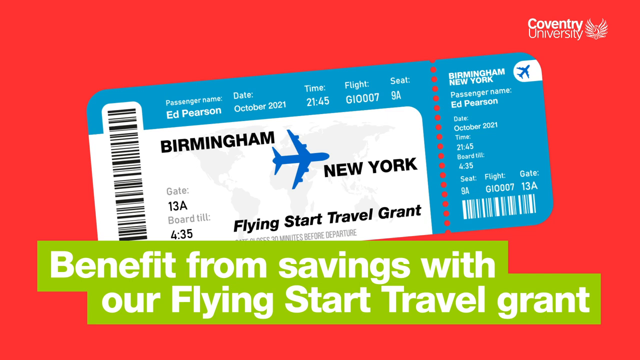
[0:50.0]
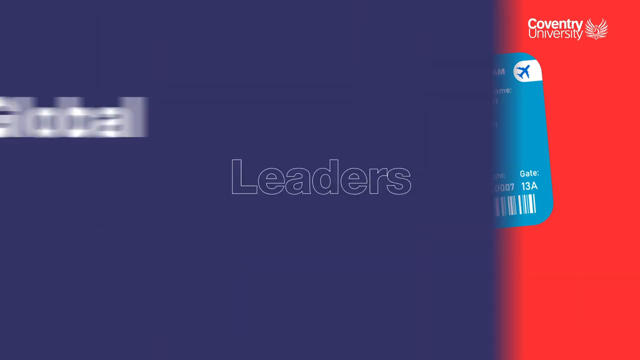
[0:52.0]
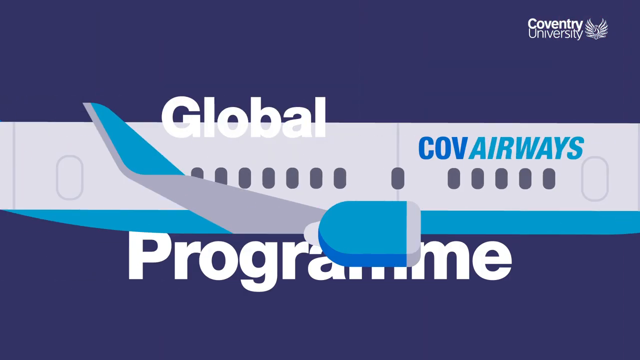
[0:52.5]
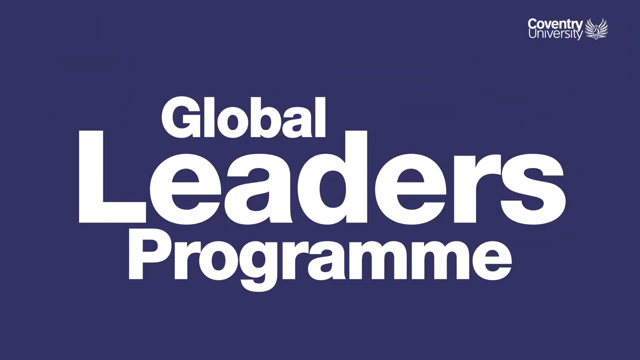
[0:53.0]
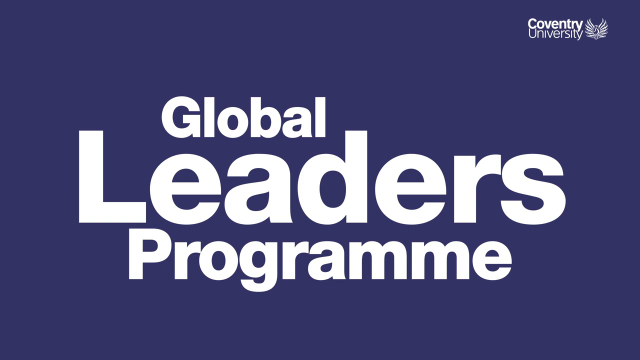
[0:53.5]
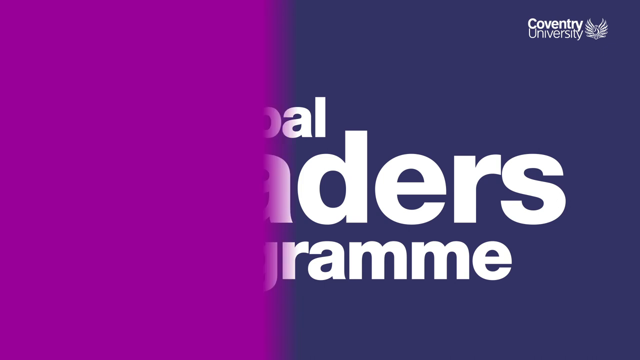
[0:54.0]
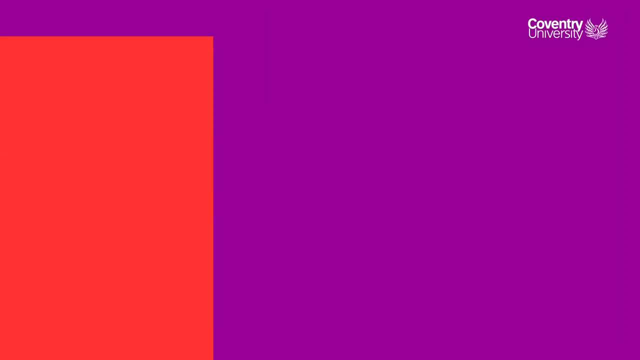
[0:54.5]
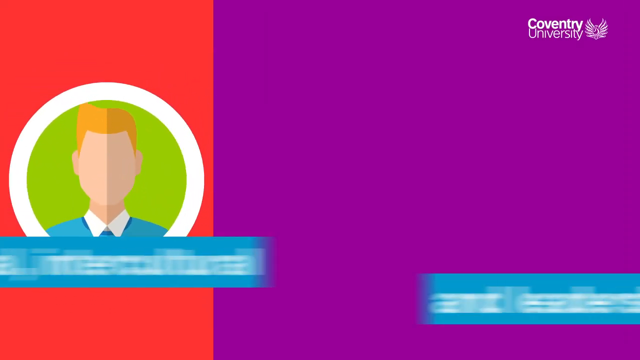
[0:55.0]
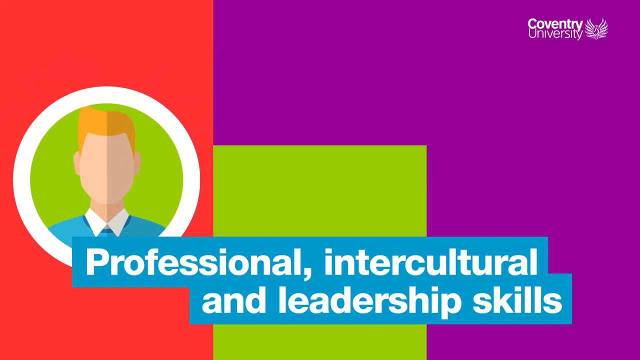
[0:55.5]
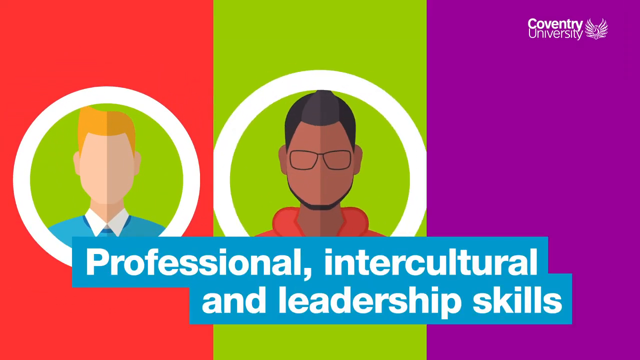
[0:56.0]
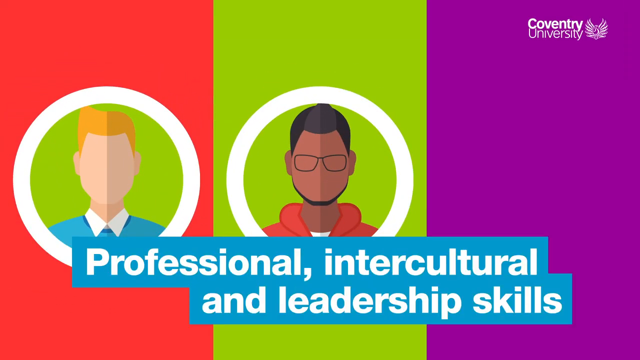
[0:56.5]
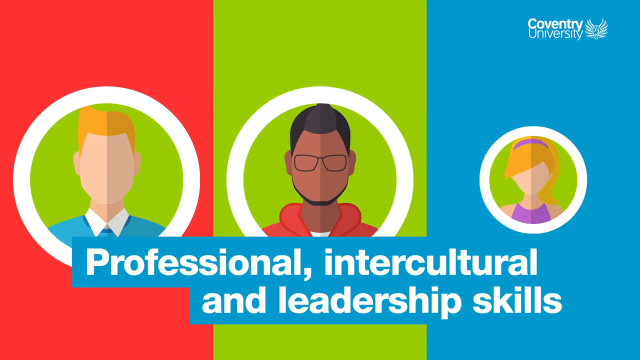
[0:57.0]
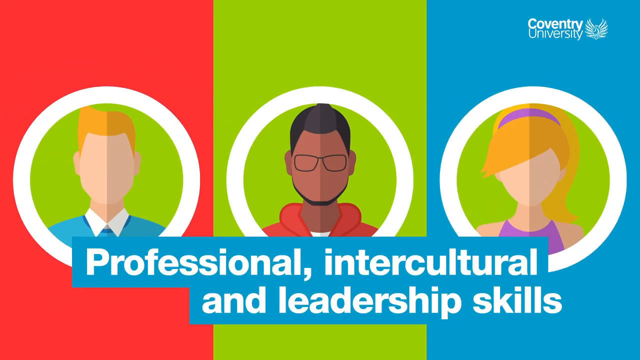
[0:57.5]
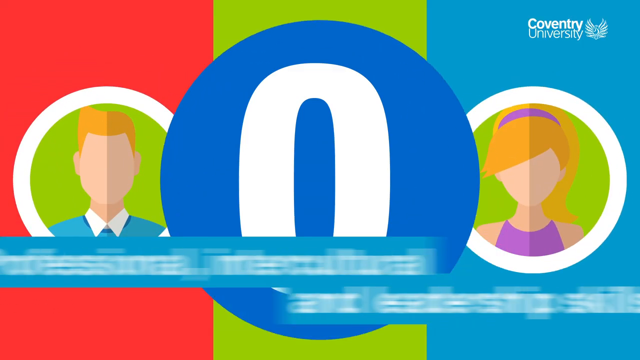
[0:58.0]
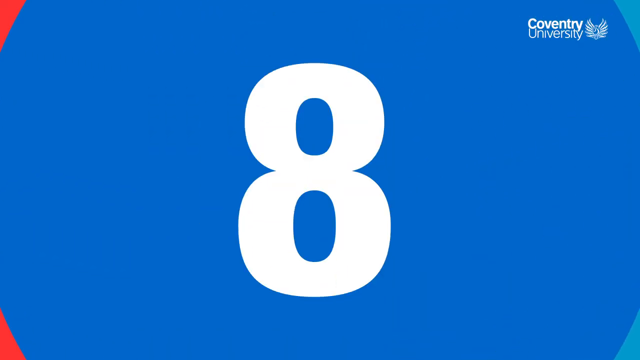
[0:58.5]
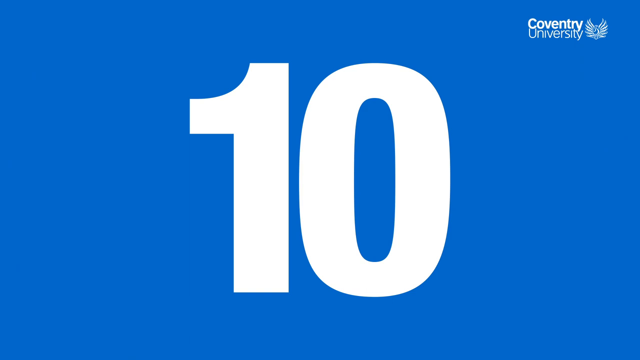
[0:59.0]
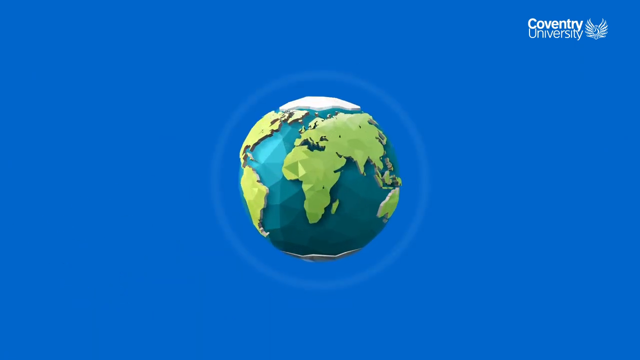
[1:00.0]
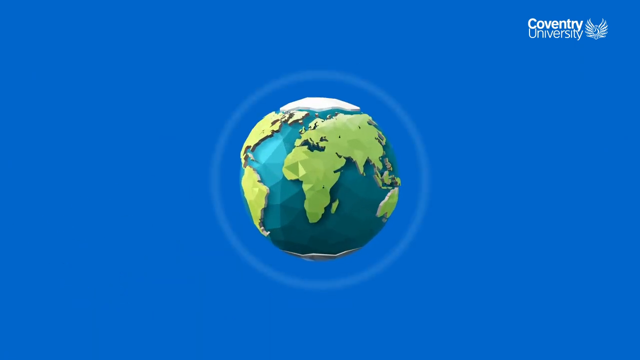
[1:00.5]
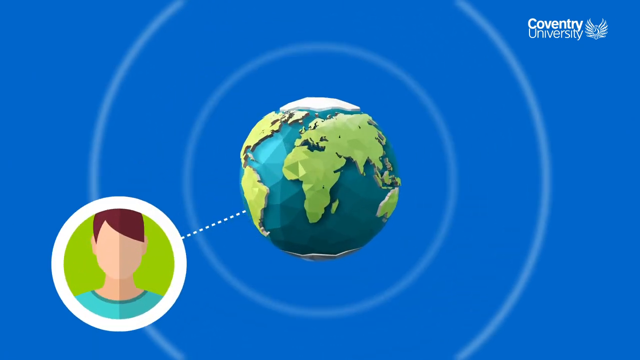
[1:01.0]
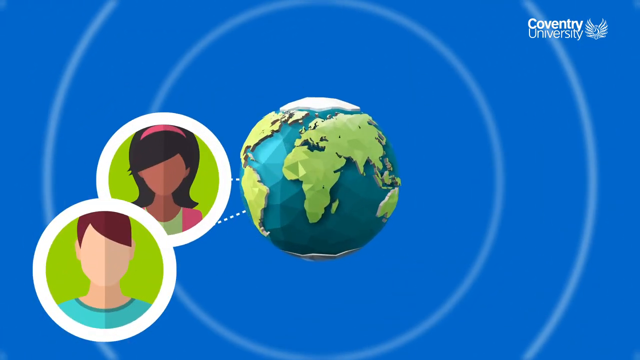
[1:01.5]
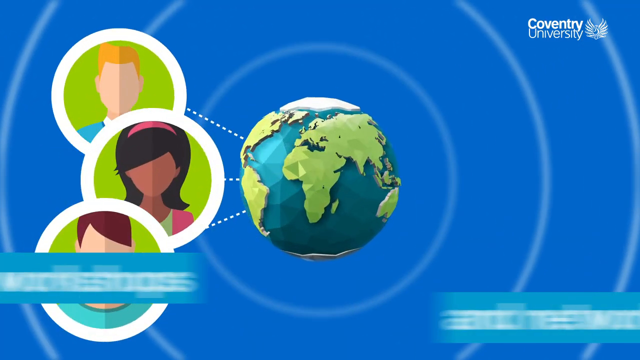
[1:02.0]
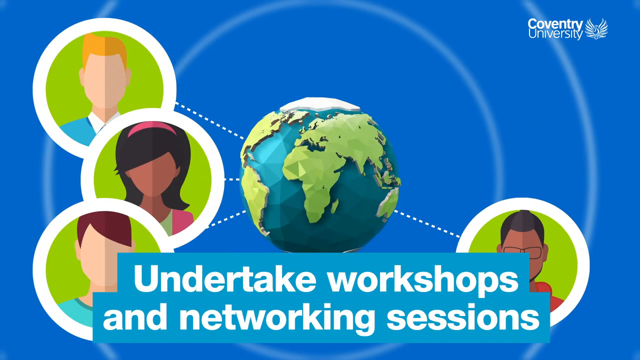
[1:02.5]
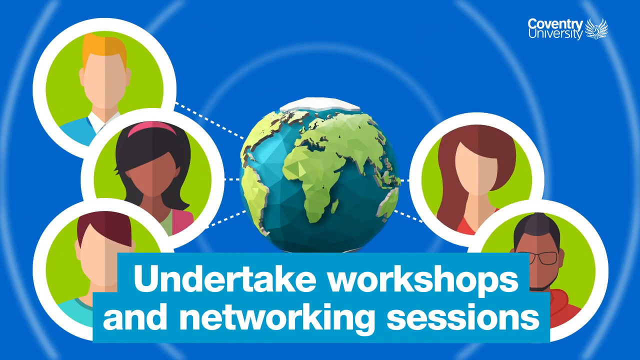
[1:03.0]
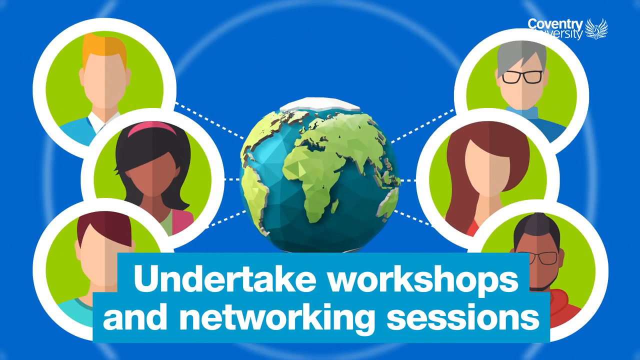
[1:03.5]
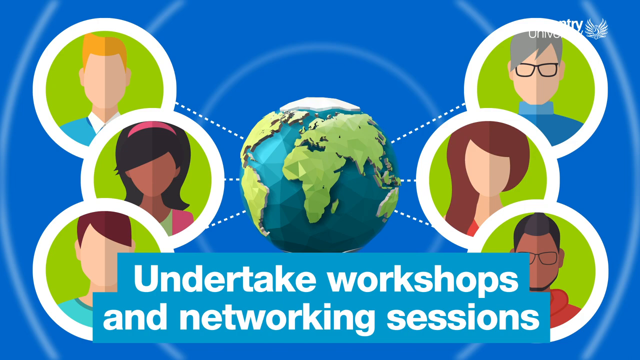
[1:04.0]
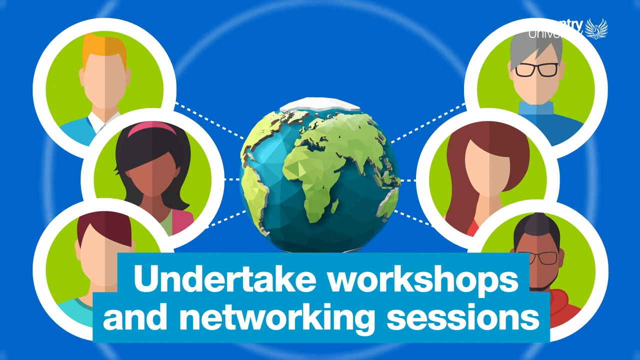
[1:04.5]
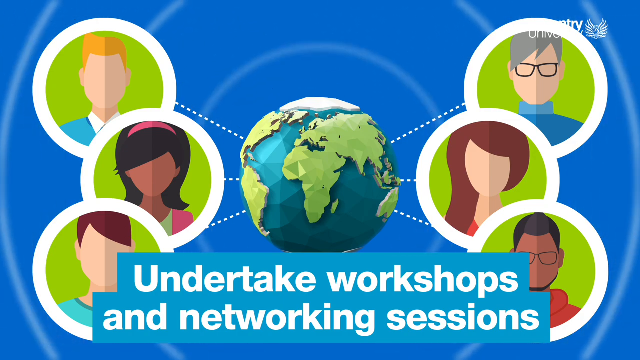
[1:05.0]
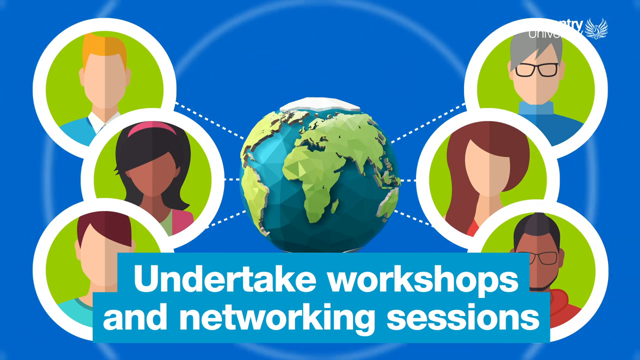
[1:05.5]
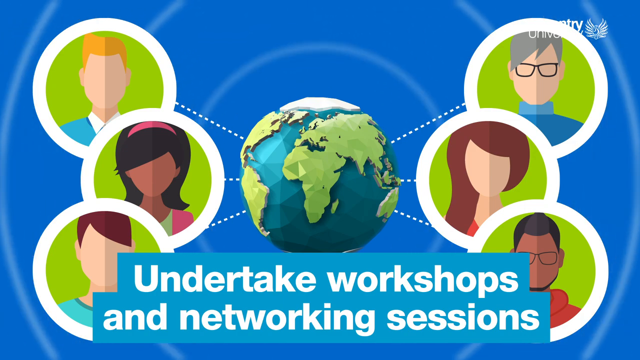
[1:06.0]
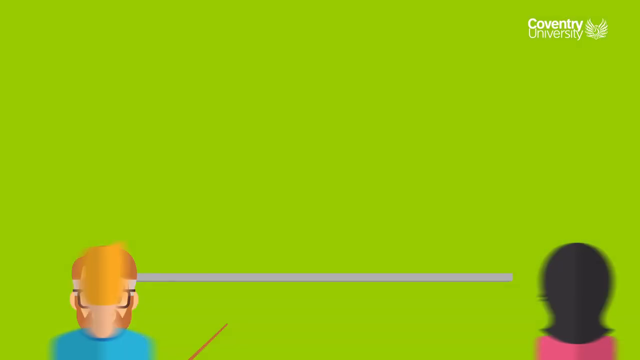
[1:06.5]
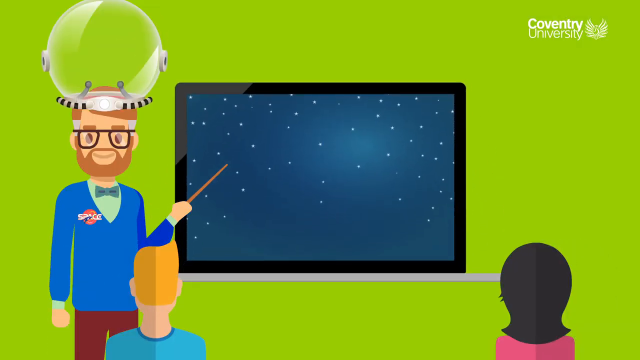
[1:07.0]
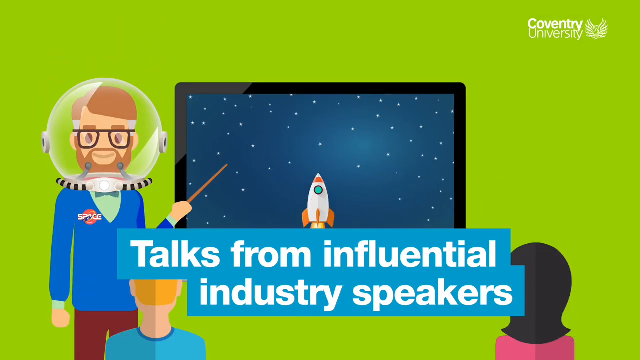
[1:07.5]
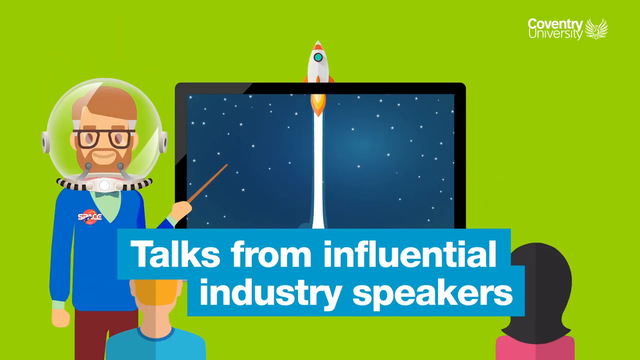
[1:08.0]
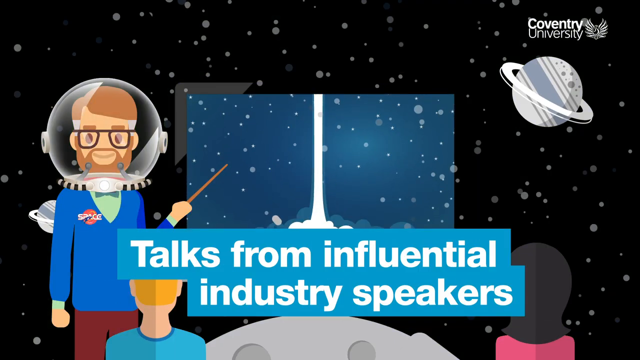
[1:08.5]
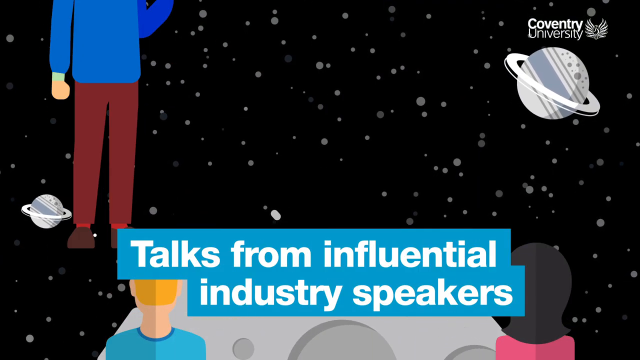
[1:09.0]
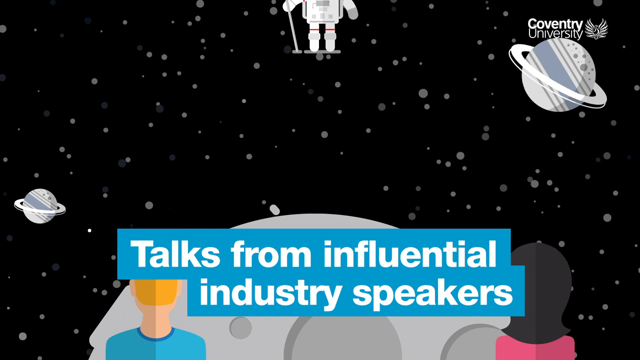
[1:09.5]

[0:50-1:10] A blue and white boarding pass is on a red background. It reads "Birmingham to New York," with a blue airplane, and at the bottom of the boarding pass, black lettering says "Flying Start Travel Grant." At the bottom of the page, bold white lettering on a green background reads "Benefit from savings with our Flying Start Travel Grant." The next page has a blue background with a large white airplane going across it, and in the middle, in bold white lettering, the words "Global Leaders Program." Then comes a purple and orange page; at its bottom, bold white lettering on a blue background reads "Professional, intercultural, and leadership skills." Several pictures pop up on this page, each inside a circle: a person with yellow hair on the left, a person with black hair and glasses in the middle, and a young lady with blonde hair and a purple headband on the left side of the page. The numbers 1 through 10 quickly populate on the page. Then a blue globe with green countries appears in the middle of the page, and pictures of a variety of people, with different hair, shapes, sizes and colors, pop up out of the globe. At the bottom of the page, text reads "Undertake workshops and network sessions."